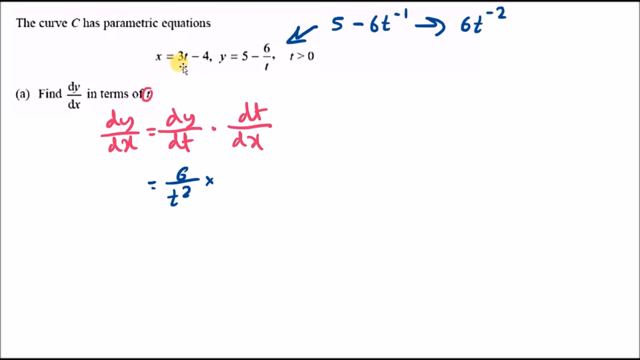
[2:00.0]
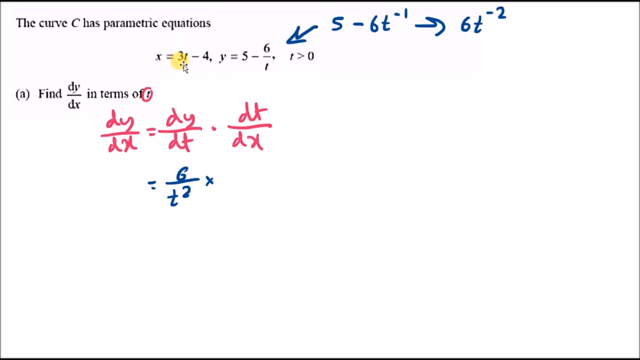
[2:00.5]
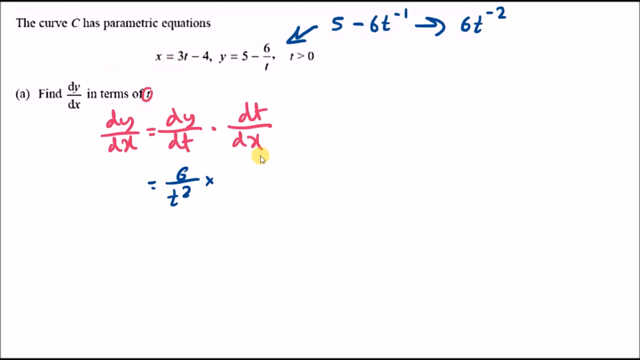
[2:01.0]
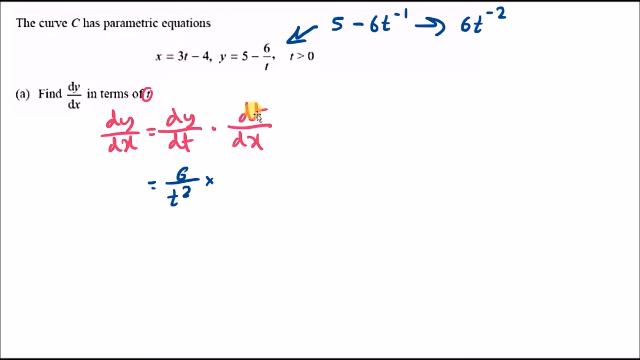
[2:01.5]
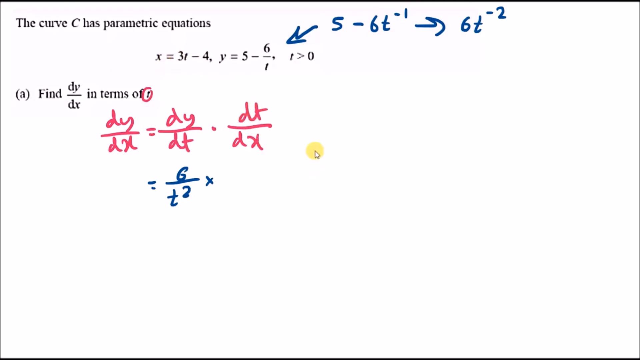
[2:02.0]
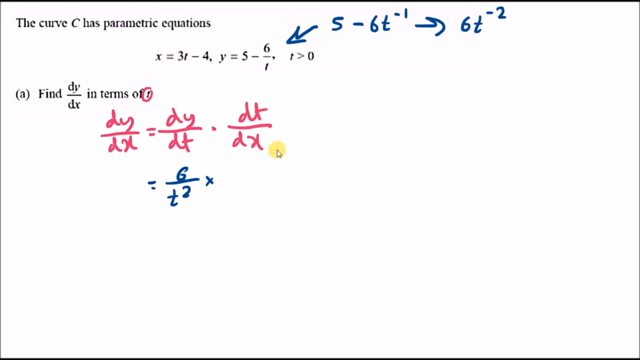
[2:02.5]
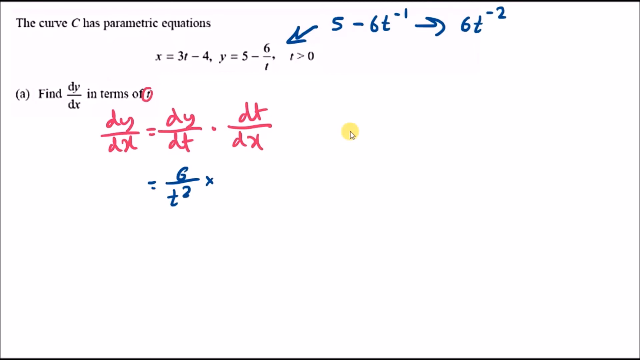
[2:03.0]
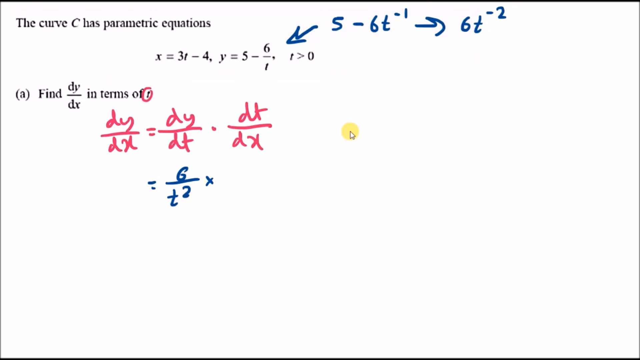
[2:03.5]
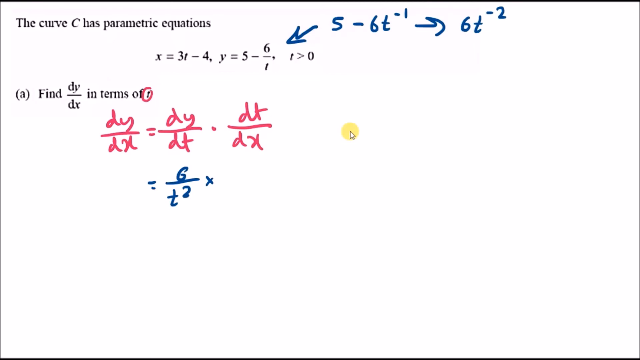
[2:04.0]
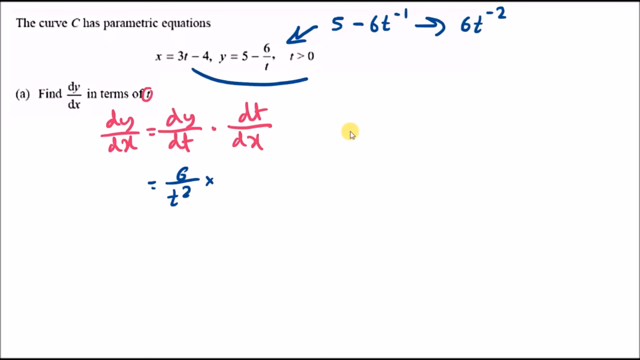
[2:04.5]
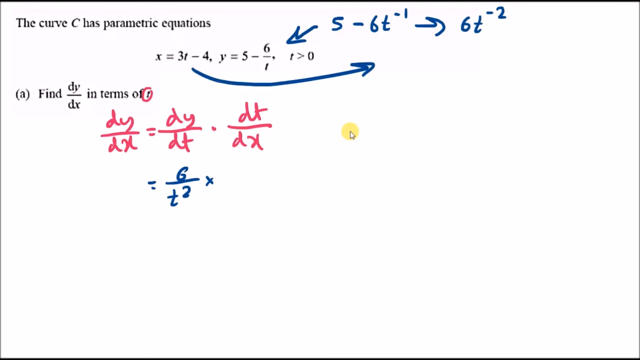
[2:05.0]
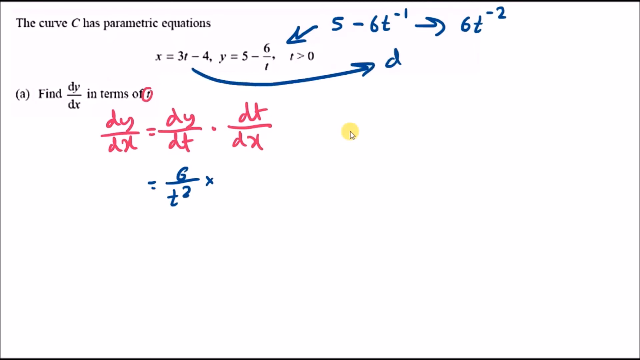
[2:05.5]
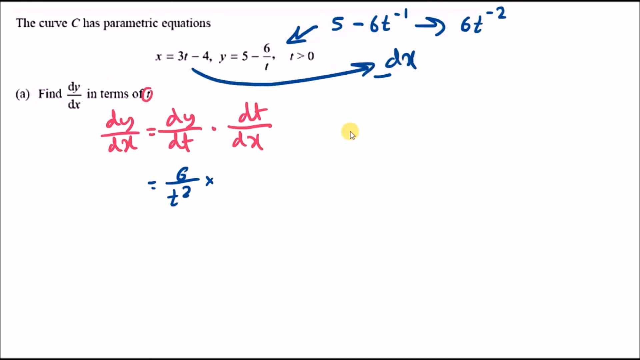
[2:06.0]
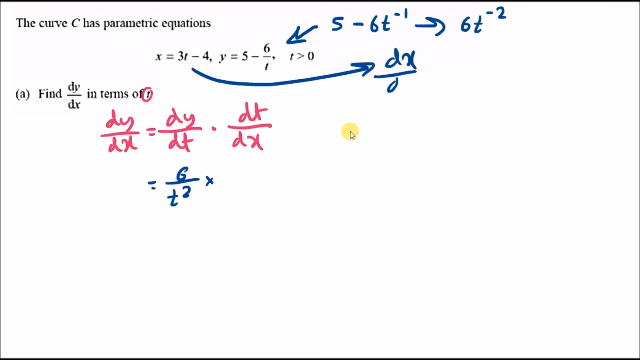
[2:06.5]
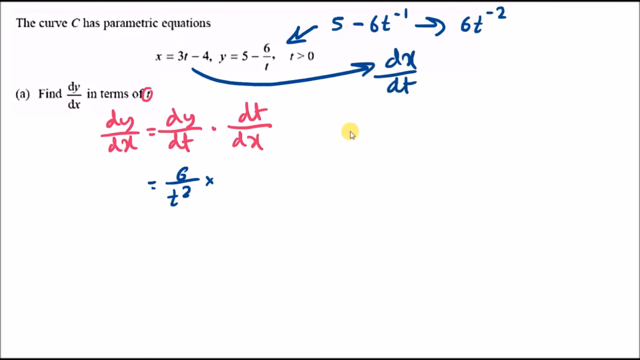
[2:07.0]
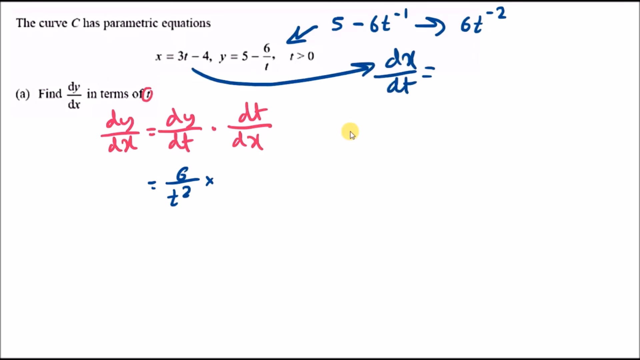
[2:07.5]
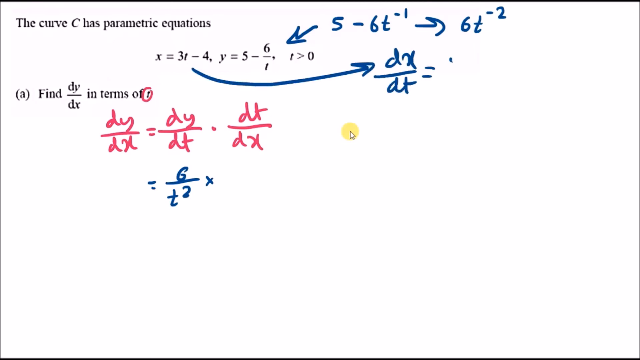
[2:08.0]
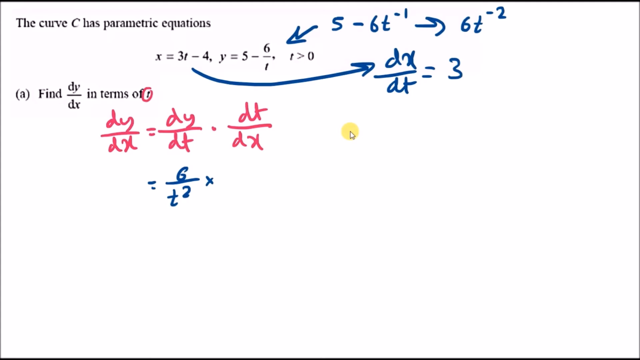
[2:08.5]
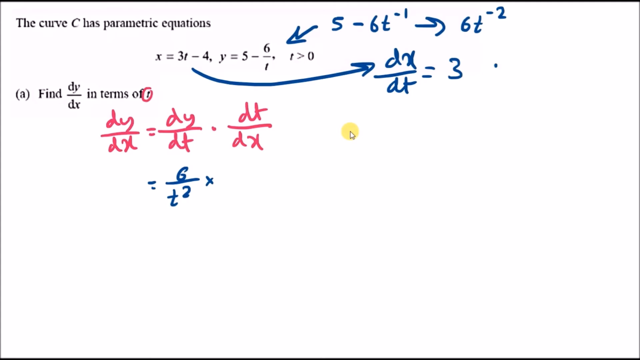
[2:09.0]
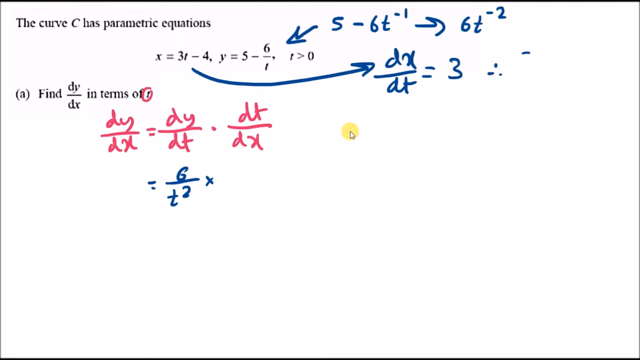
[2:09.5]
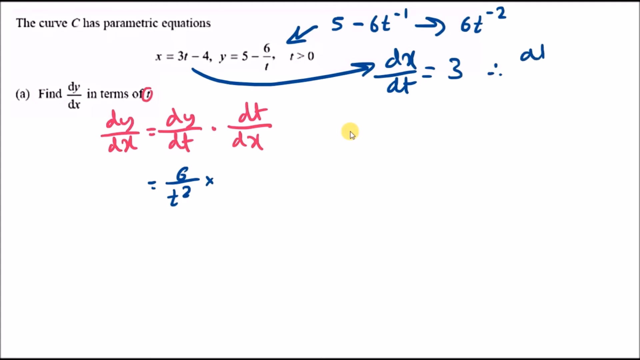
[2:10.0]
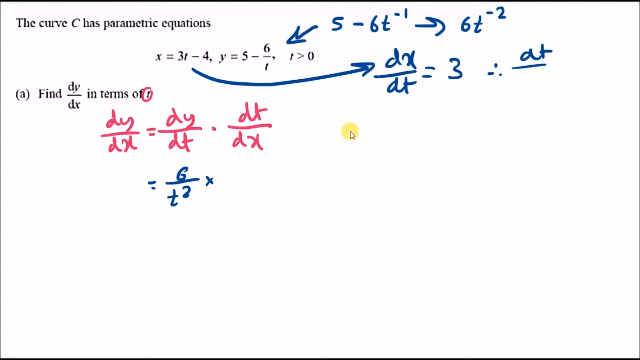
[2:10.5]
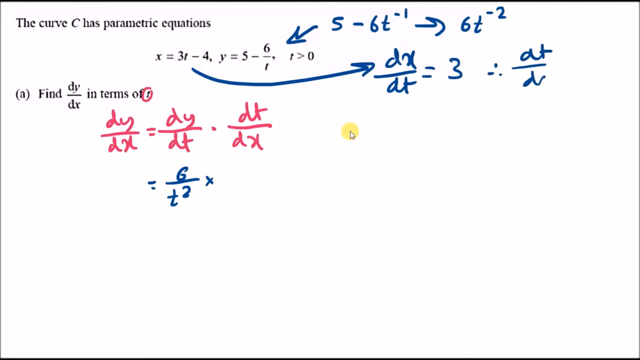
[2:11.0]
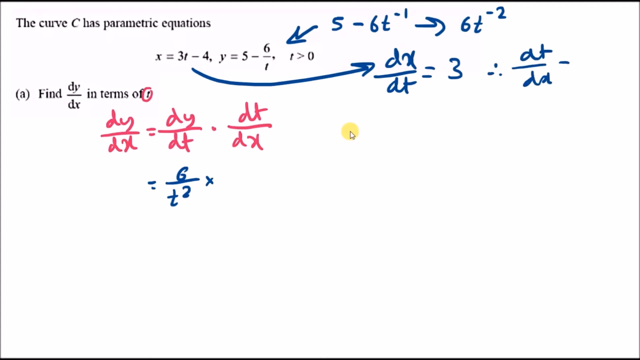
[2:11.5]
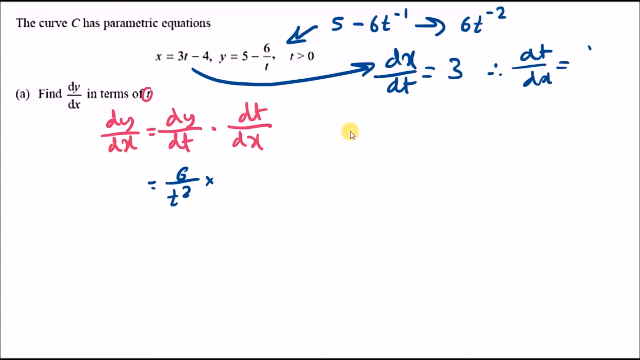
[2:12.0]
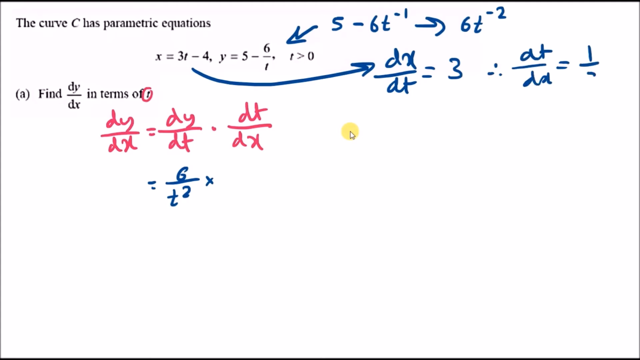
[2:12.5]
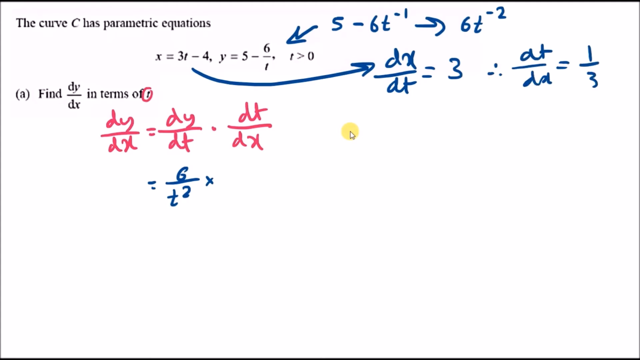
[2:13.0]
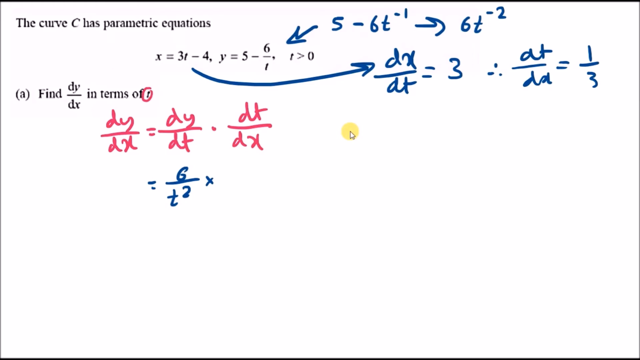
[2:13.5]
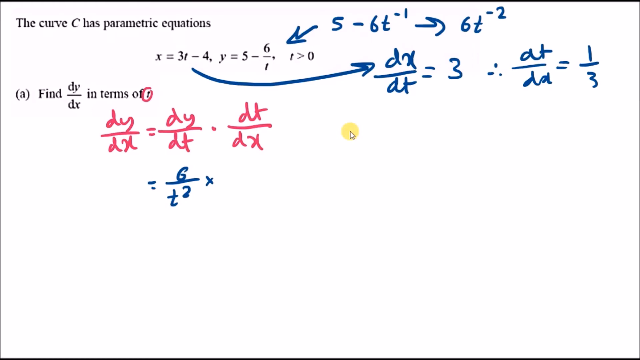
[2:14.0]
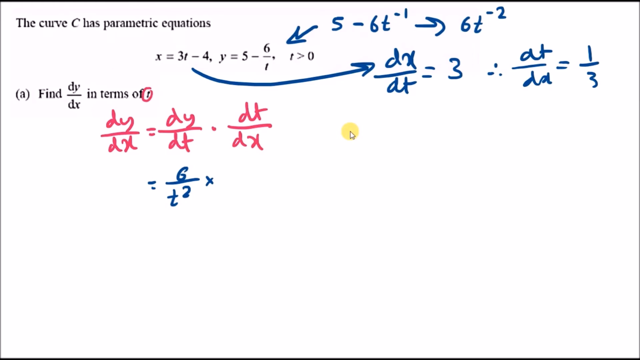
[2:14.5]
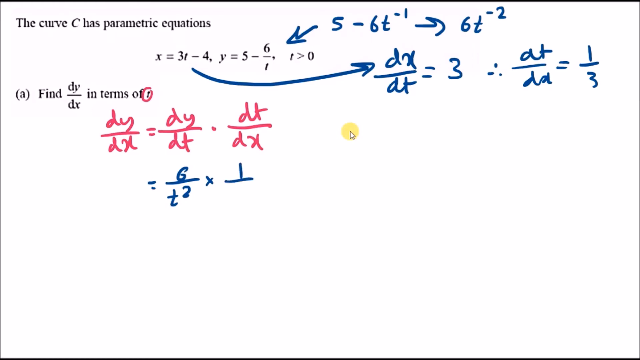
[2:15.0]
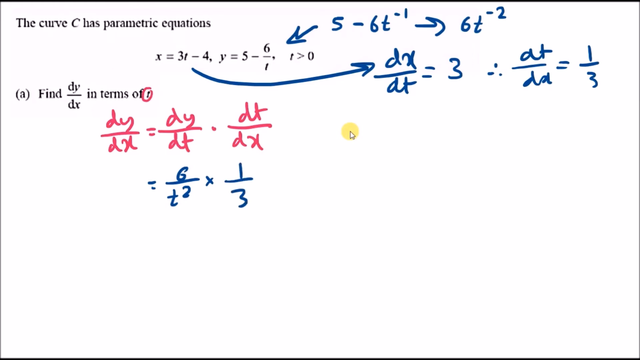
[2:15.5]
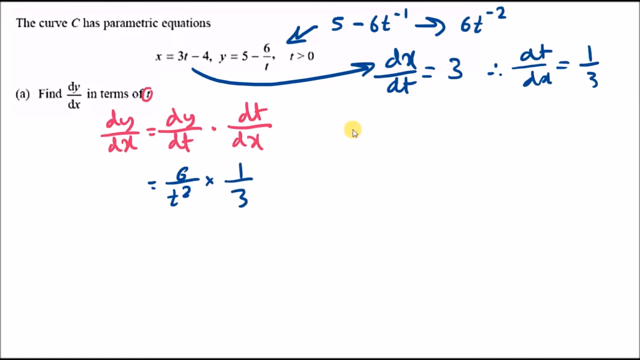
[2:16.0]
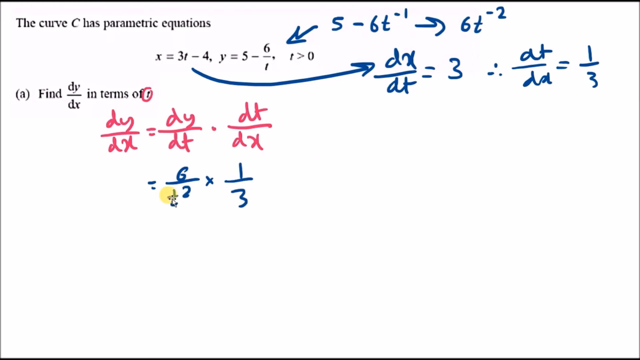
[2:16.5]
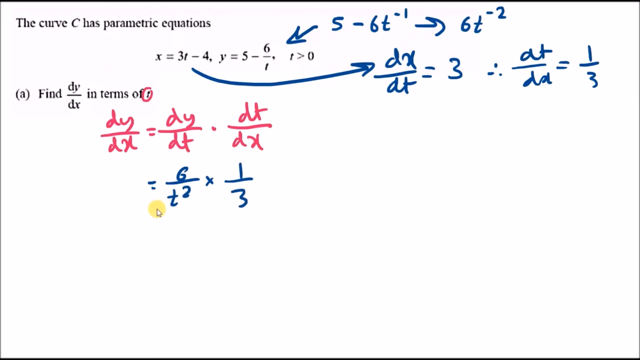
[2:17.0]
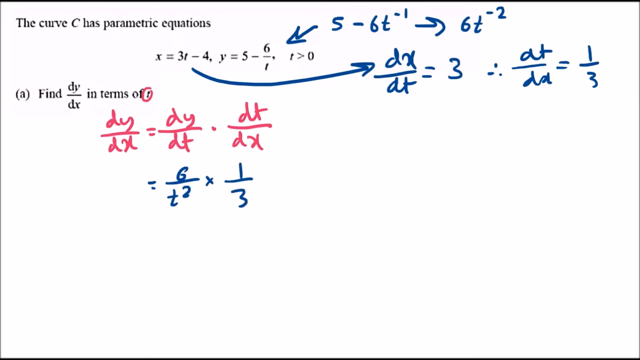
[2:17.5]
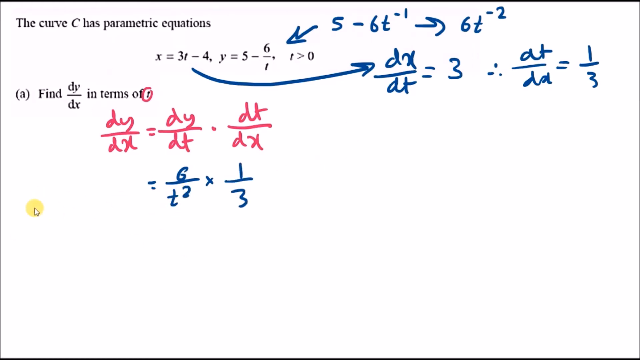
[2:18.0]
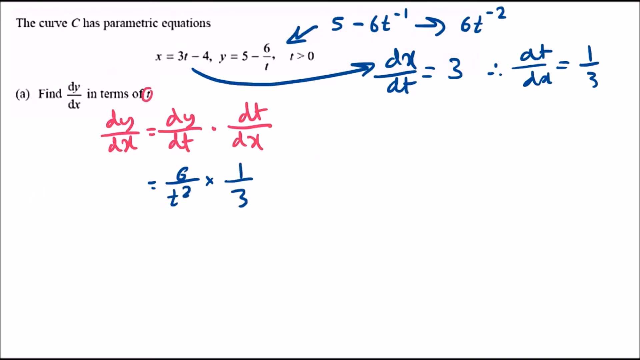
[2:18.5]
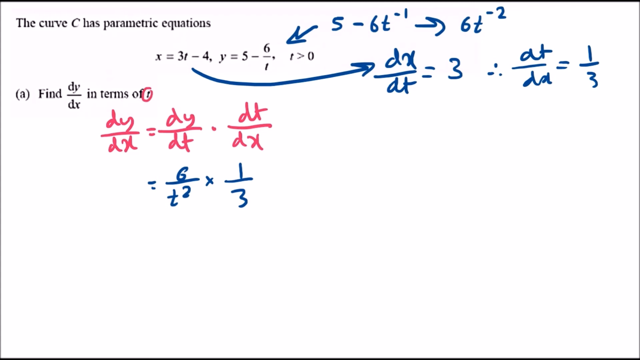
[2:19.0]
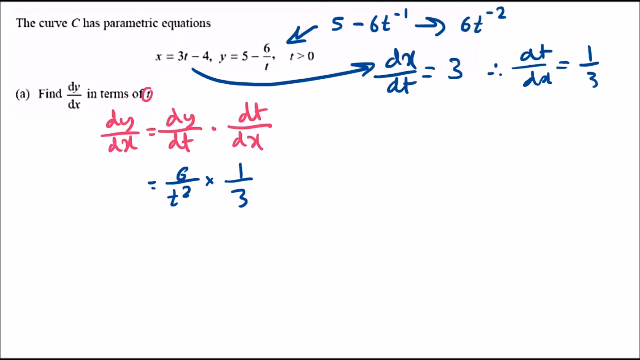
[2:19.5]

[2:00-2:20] On a mostly white background, the question asks to find dy over dx in terms of t and provides parametric equations for the curve C. An equation is written in pink marker and is being filled out in blue marker. The cursor highlights and circles the written dt over dx. From the given x equals statement in the parametric equations, an arrow is drawn and dx / dt = 3 is written. A therefore statement follows, indicating that dt / dx must then equal 1 / 3. Using that, blue marker fills in dt / dx as equal to 1 / 3 below the pink equation.